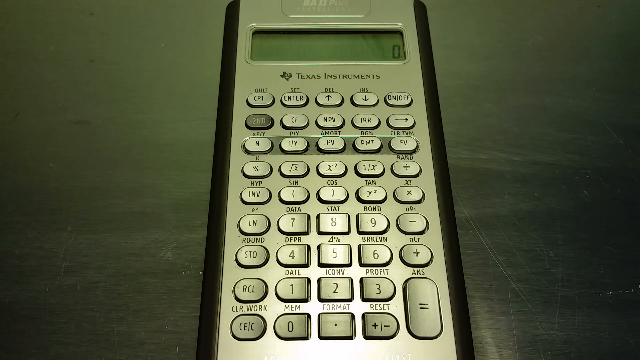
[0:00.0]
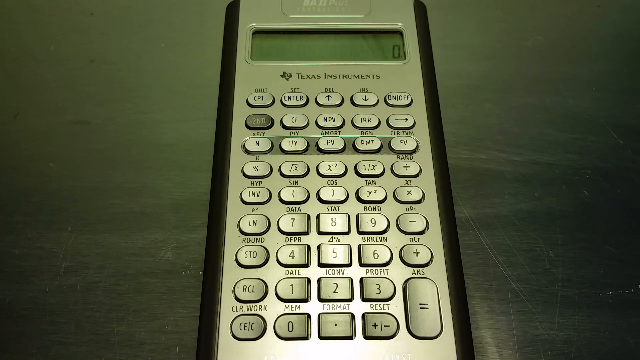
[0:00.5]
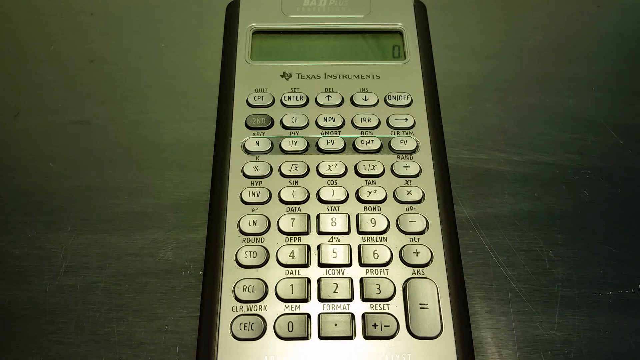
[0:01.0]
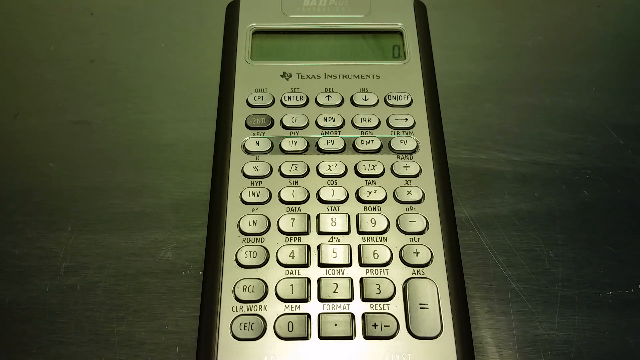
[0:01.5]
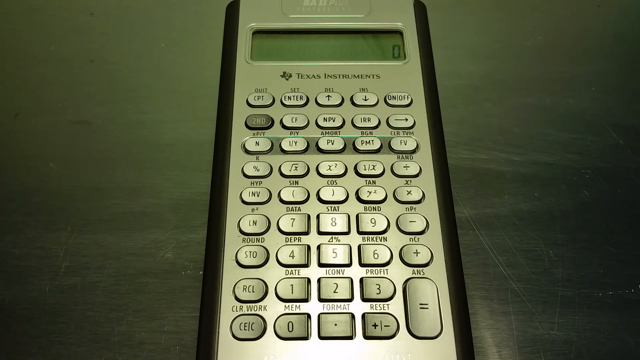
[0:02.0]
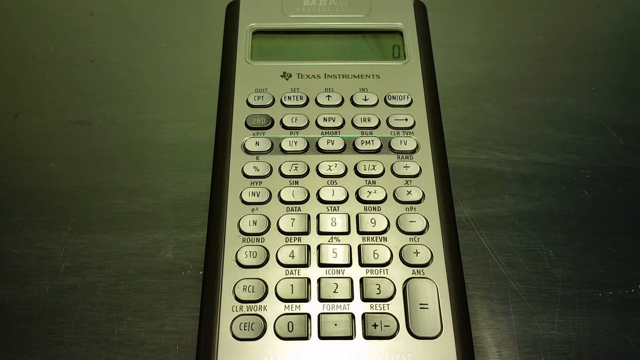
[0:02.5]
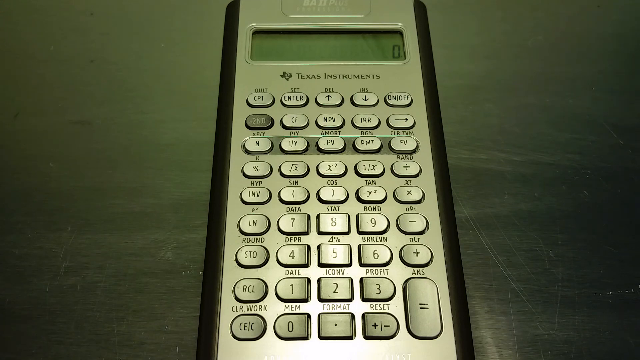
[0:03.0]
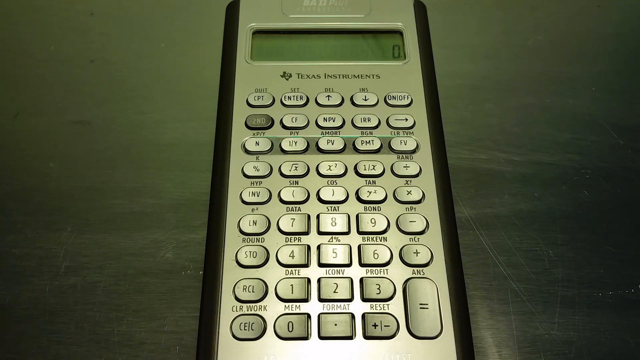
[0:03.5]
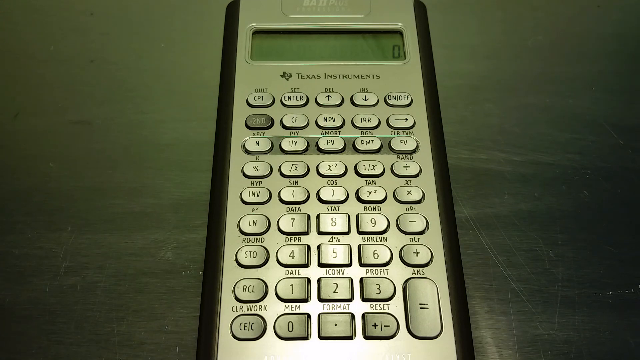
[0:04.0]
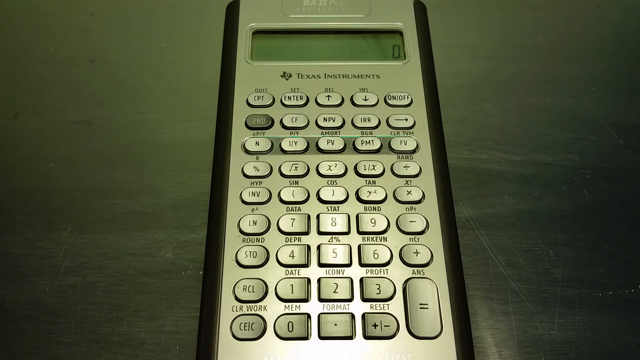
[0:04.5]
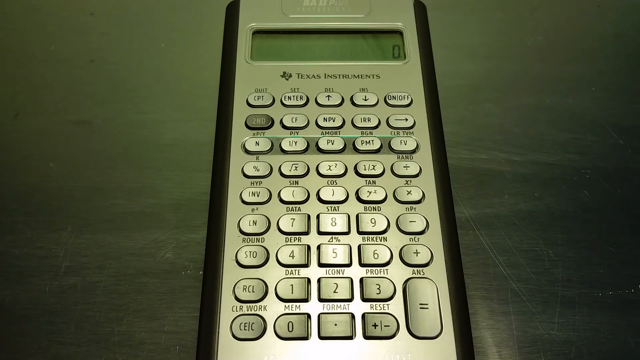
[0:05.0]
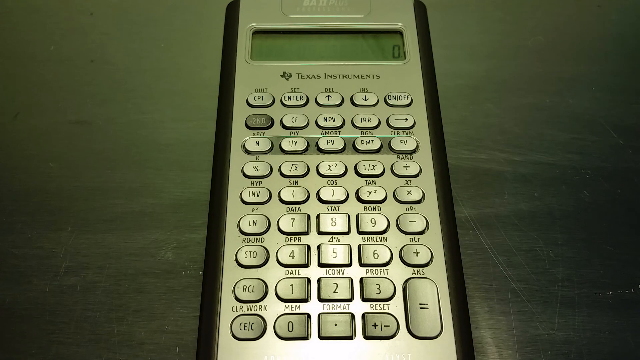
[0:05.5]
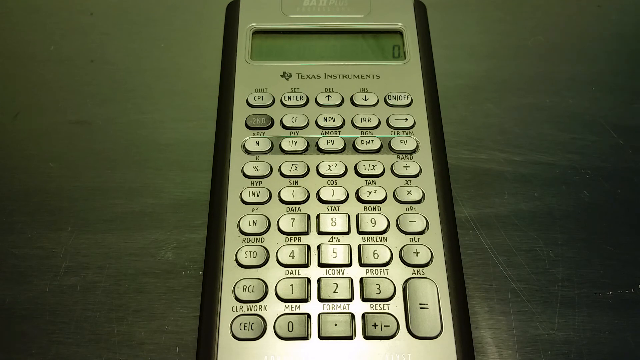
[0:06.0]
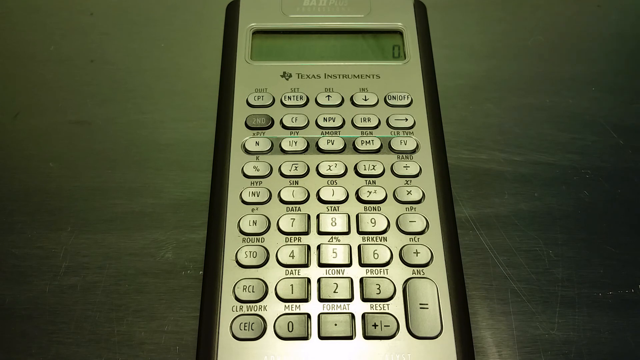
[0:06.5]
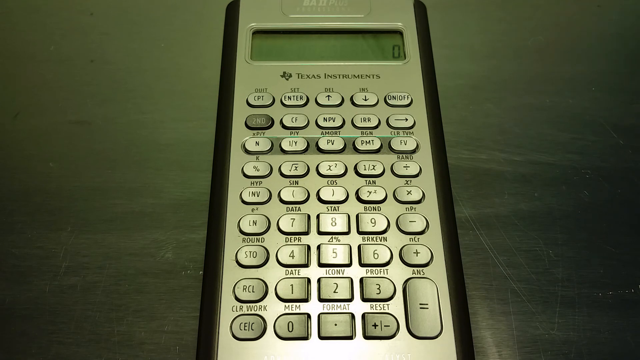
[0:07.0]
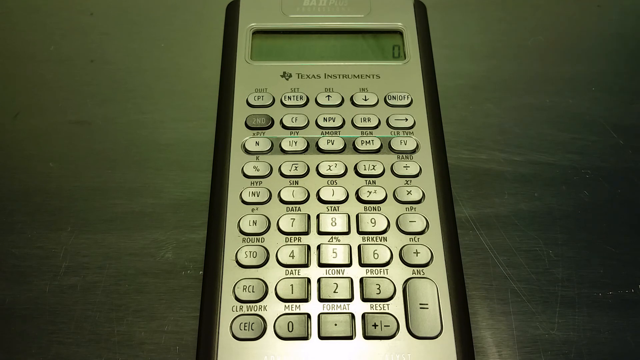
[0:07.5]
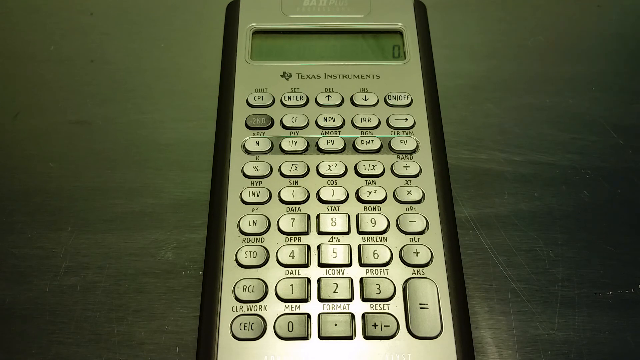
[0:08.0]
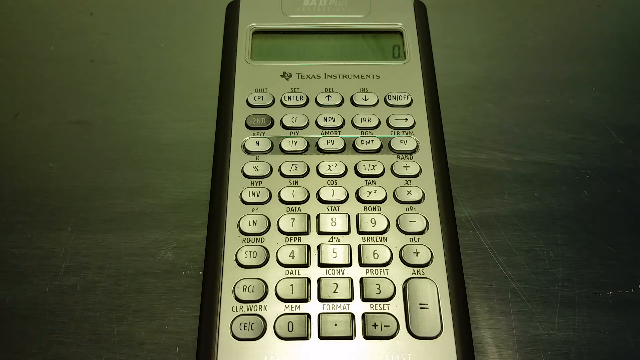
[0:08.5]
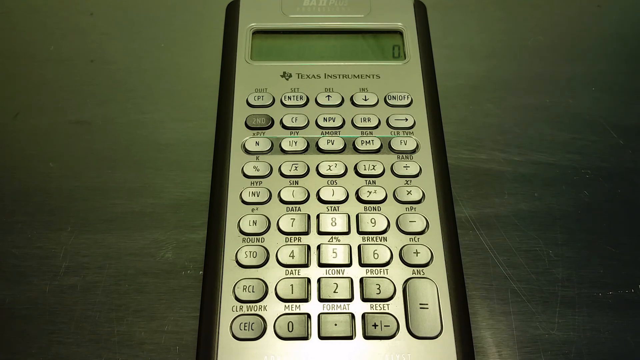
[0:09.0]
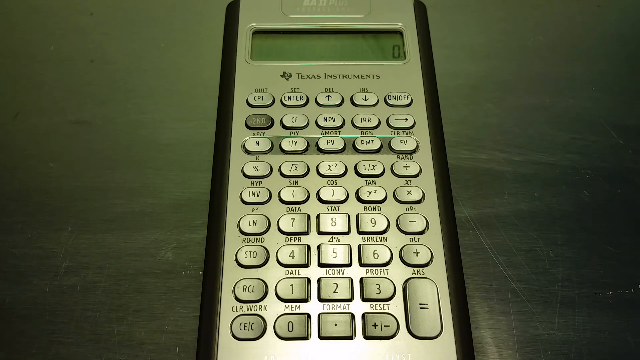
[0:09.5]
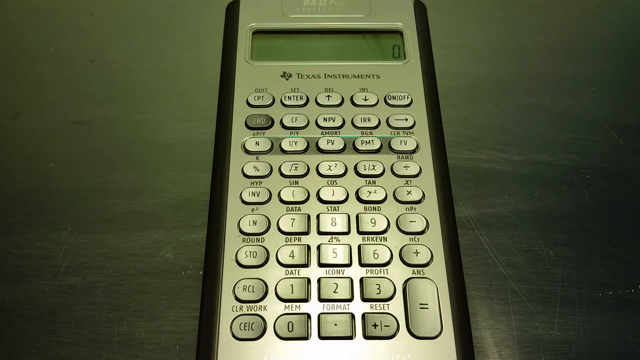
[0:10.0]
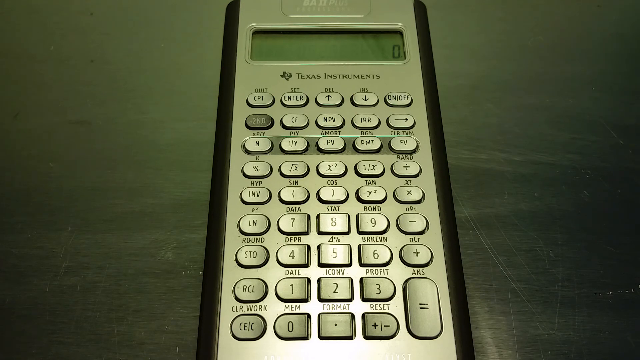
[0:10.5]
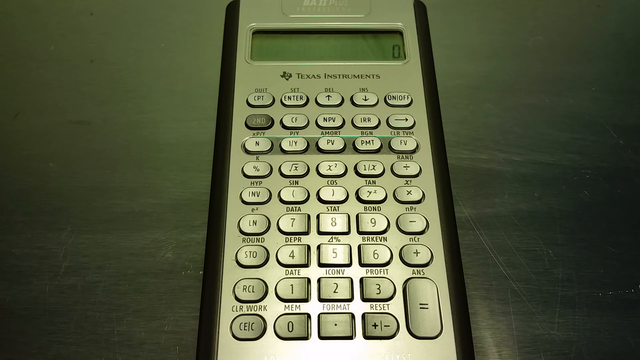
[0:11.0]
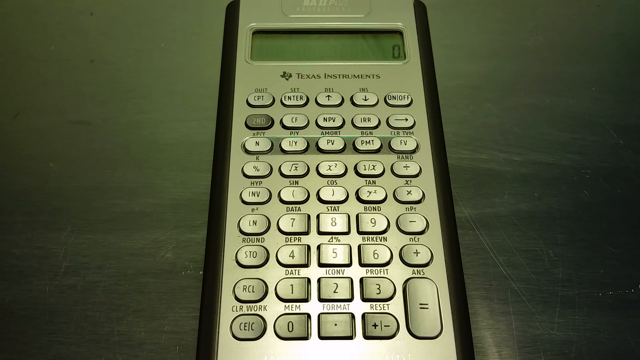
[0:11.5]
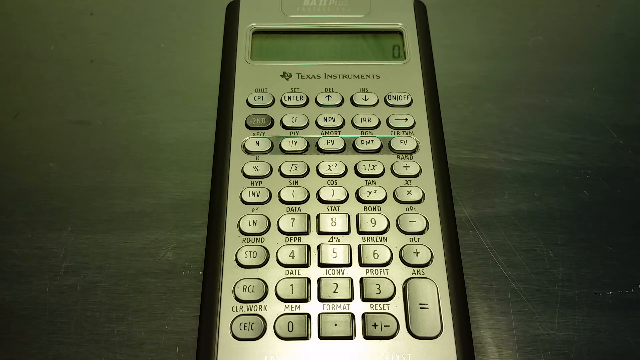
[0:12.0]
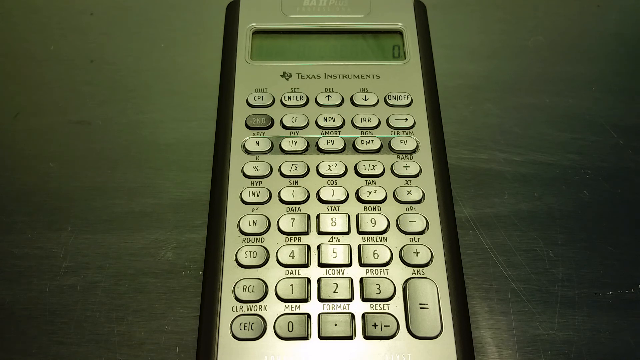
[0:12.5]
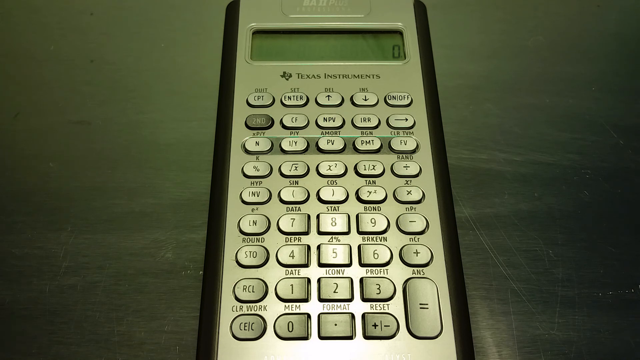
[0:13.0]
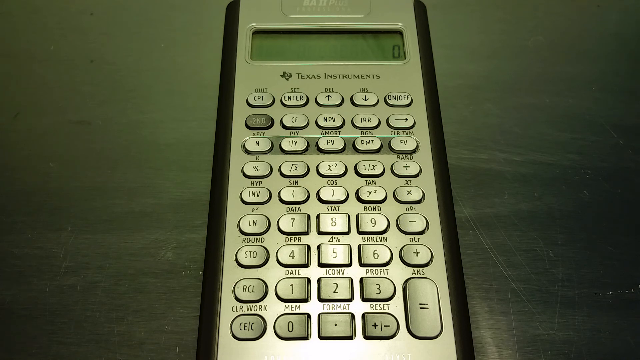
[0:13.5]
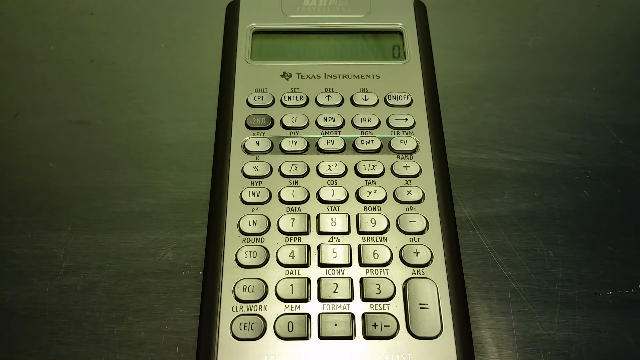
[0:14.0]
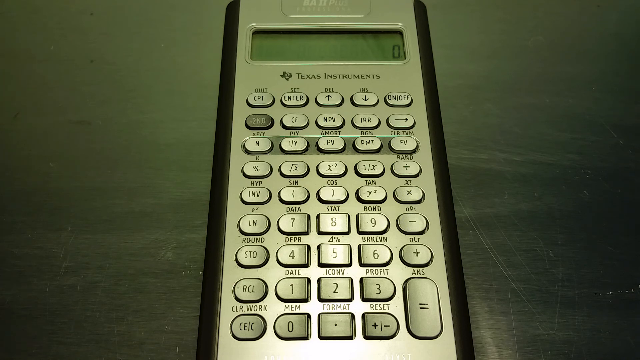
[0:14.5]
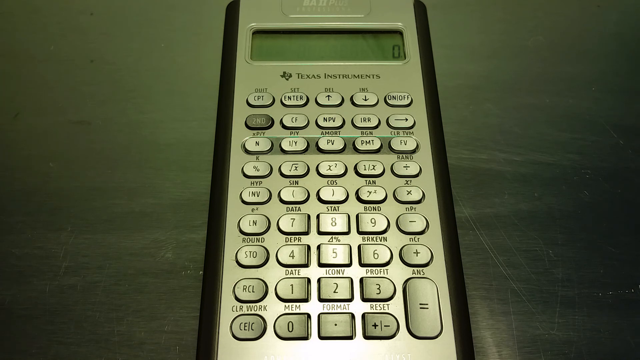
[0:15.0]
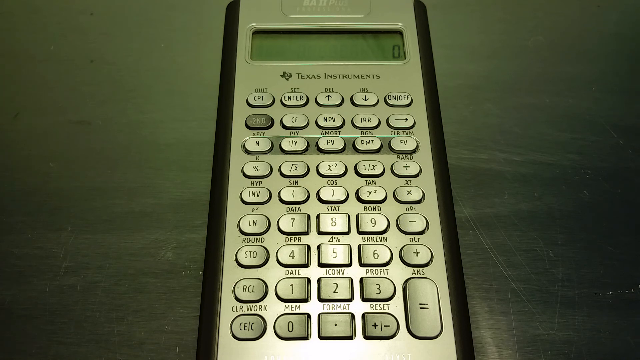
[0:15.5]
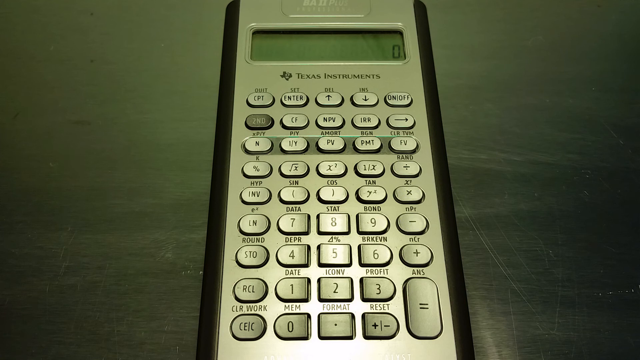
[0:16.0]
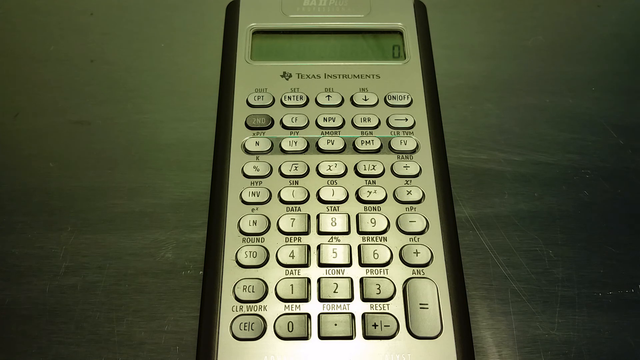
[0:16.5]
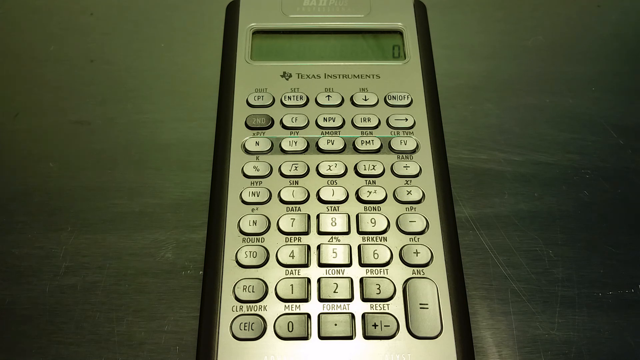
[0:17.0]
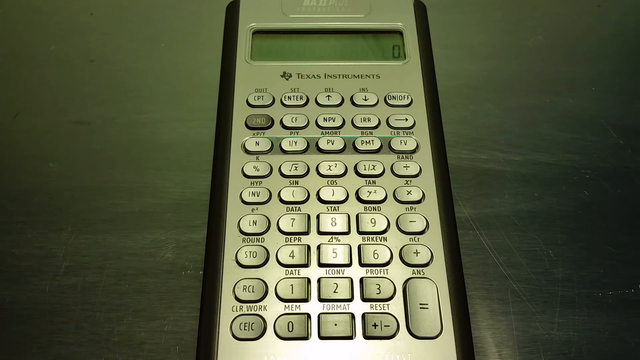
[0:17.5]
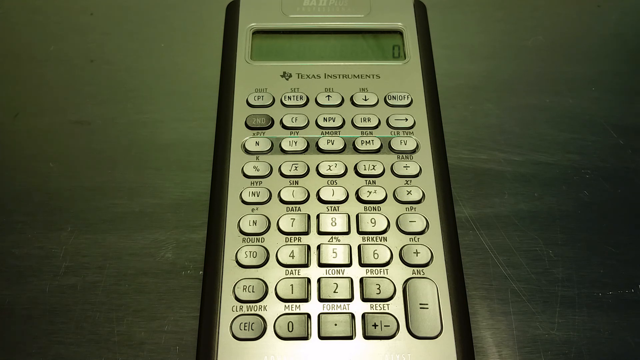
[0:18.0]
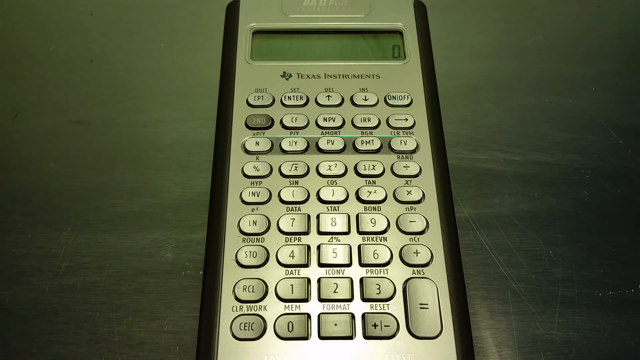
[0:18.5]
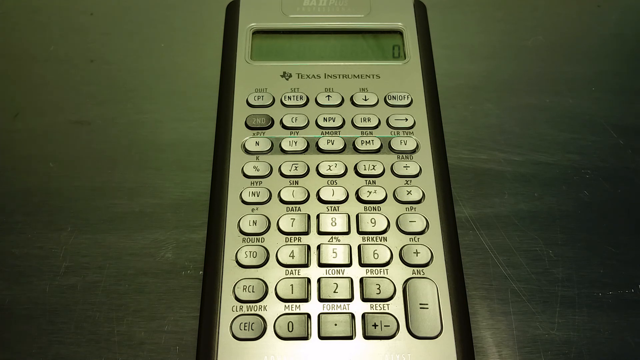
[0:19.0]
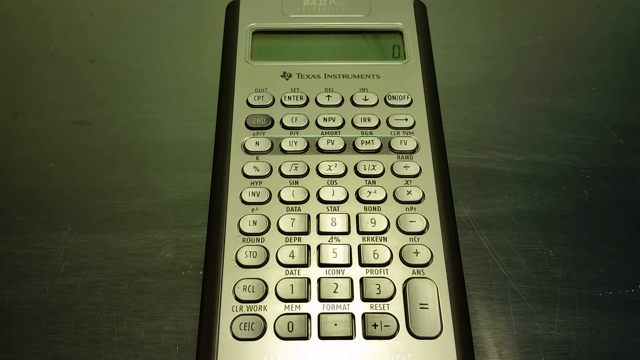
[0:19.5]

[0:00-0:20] A Texas Instruments calculator is shown. It has buttons including a zero, CPT, enter, and on and off. There are also buttons labeled data, bond, profit, format, and a reset button. The calculator is off-white with black edges, and on top of it there is white text that appears to read something like "radar".